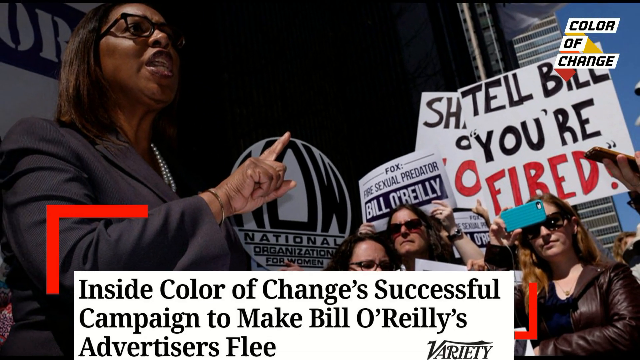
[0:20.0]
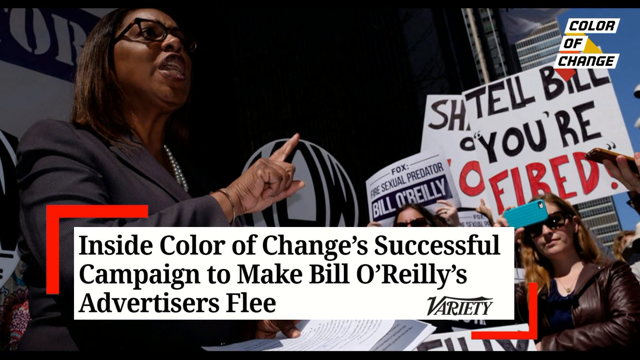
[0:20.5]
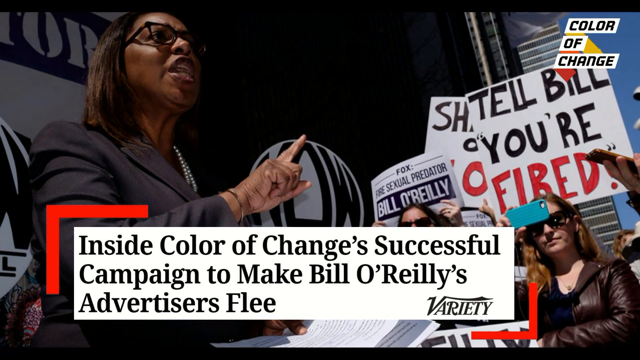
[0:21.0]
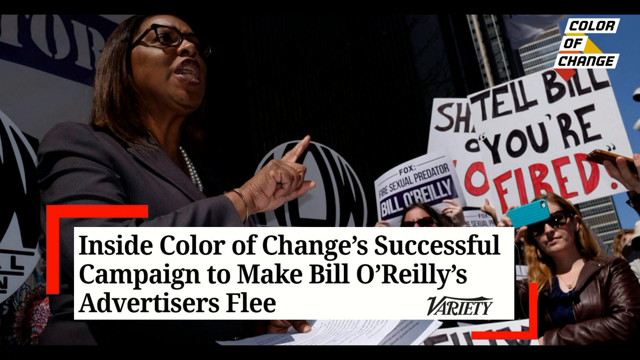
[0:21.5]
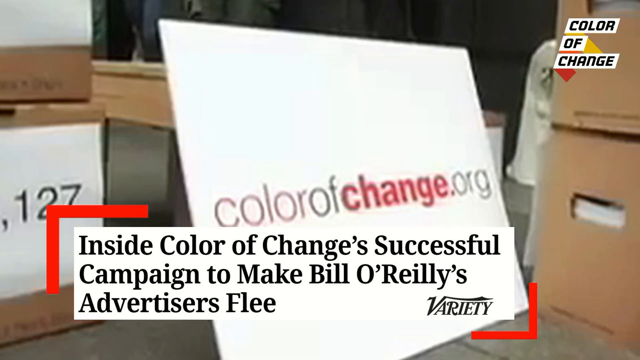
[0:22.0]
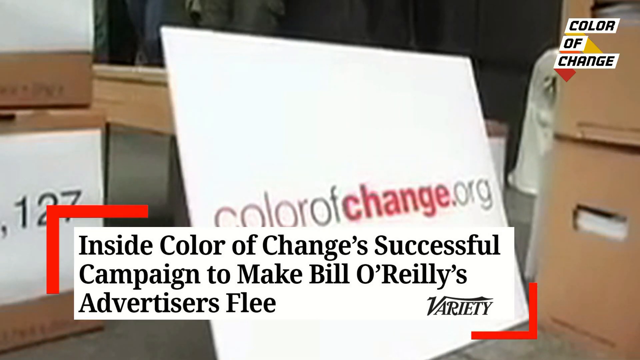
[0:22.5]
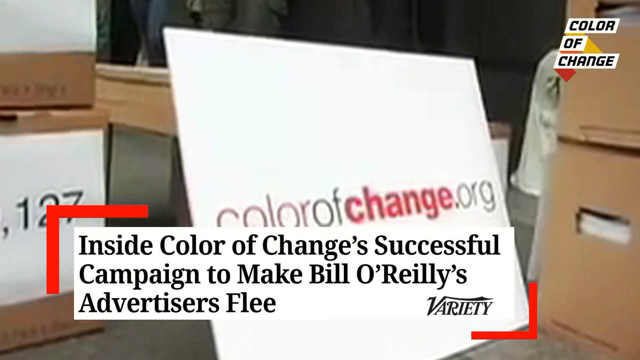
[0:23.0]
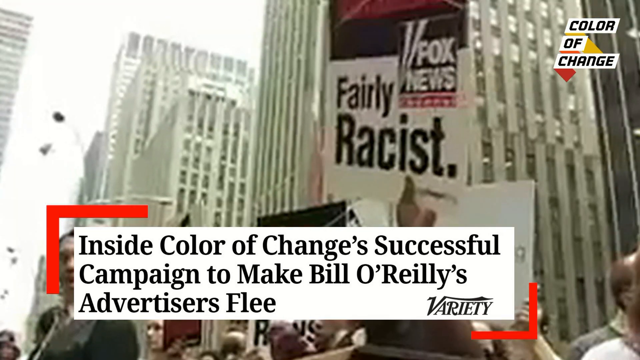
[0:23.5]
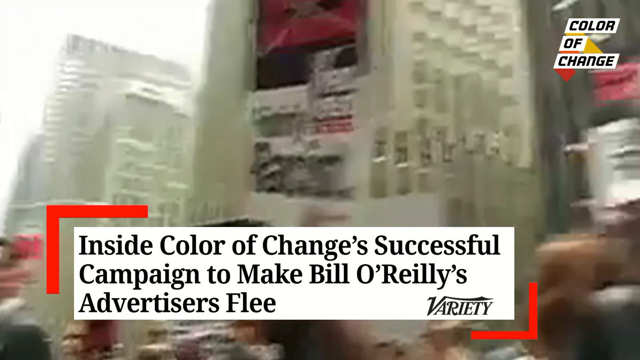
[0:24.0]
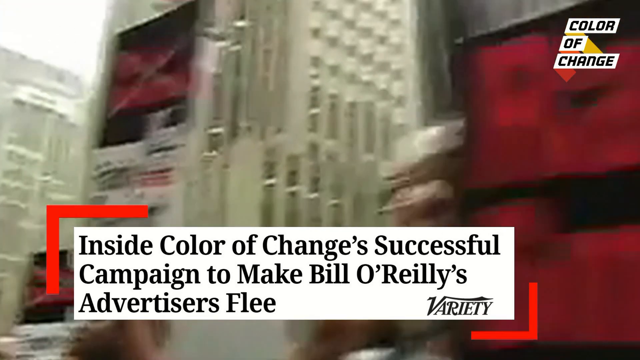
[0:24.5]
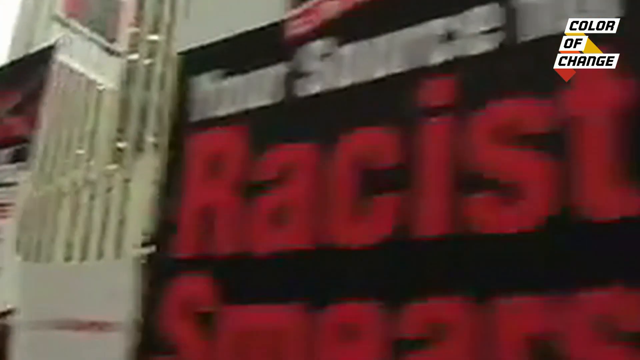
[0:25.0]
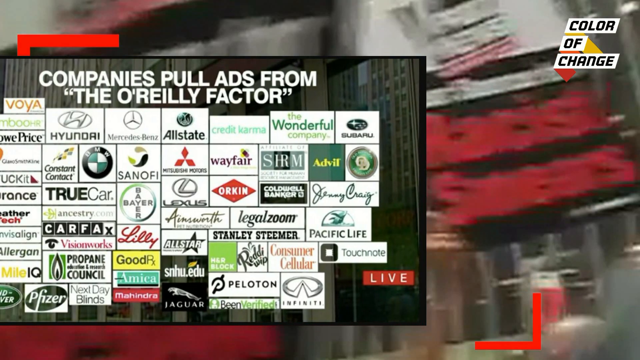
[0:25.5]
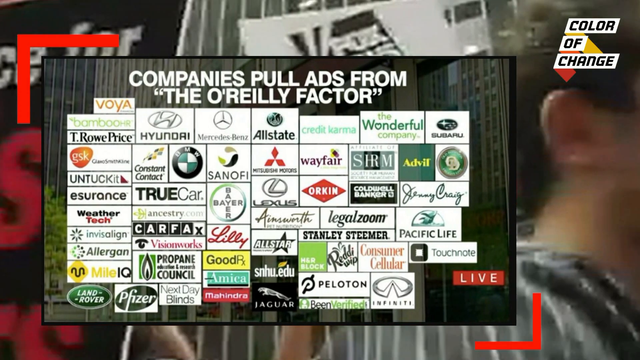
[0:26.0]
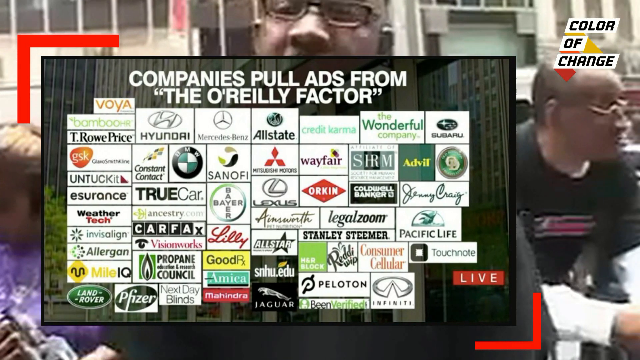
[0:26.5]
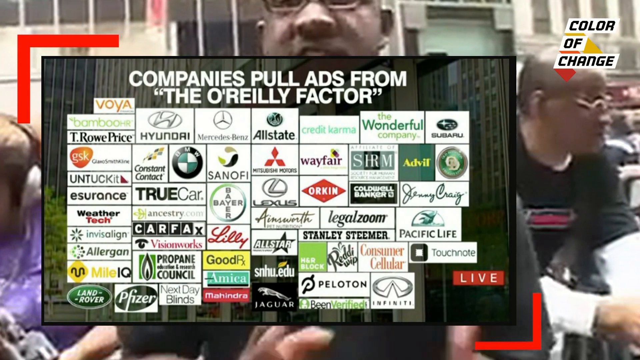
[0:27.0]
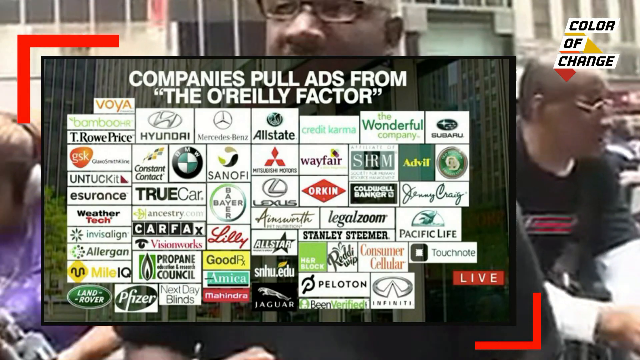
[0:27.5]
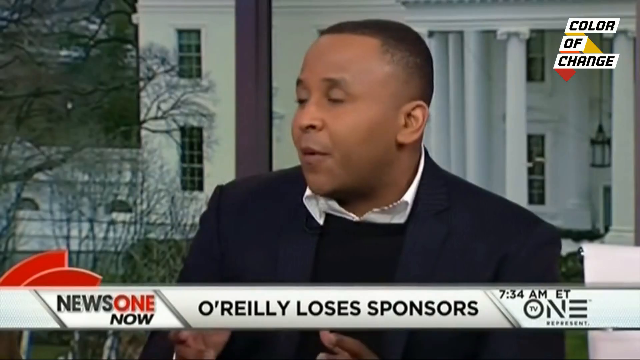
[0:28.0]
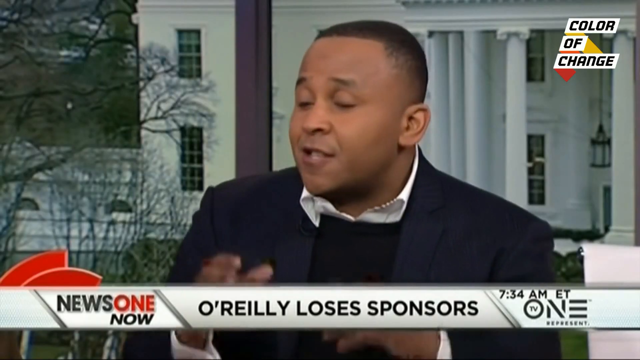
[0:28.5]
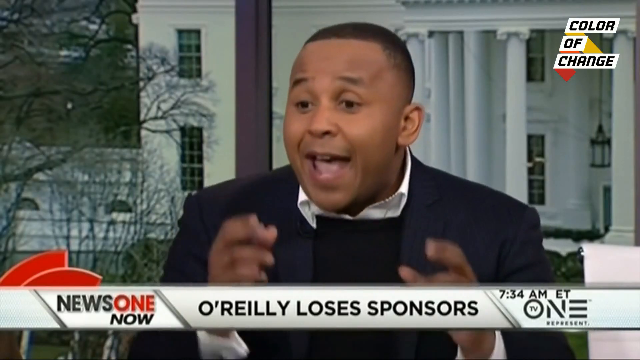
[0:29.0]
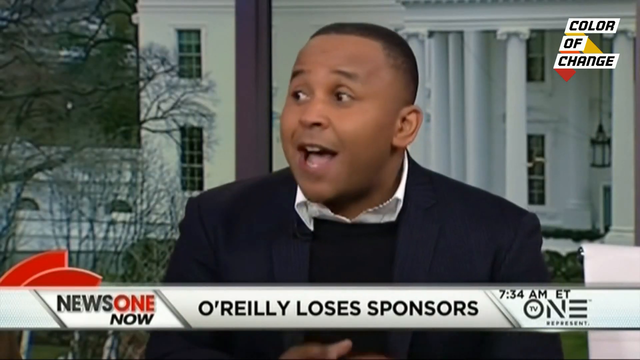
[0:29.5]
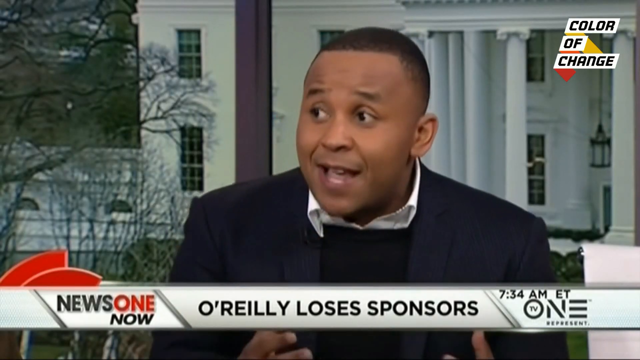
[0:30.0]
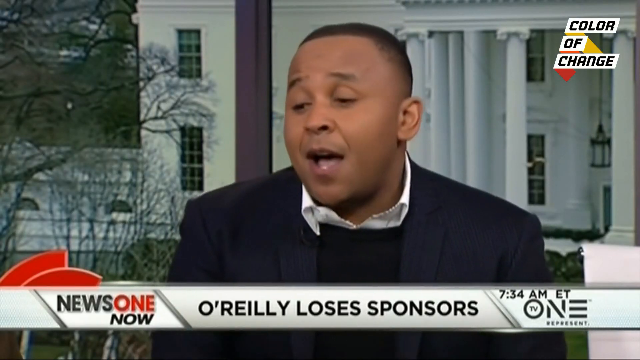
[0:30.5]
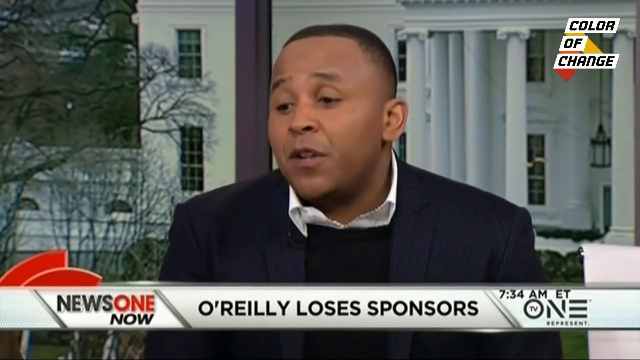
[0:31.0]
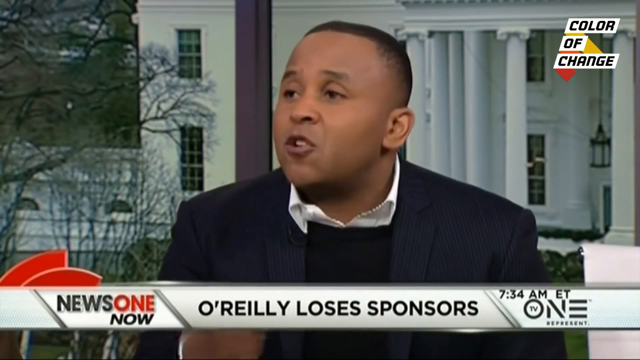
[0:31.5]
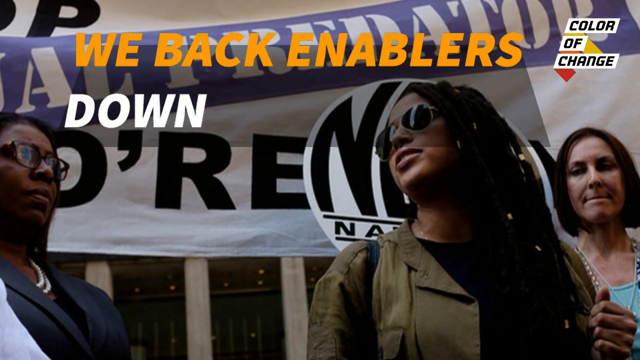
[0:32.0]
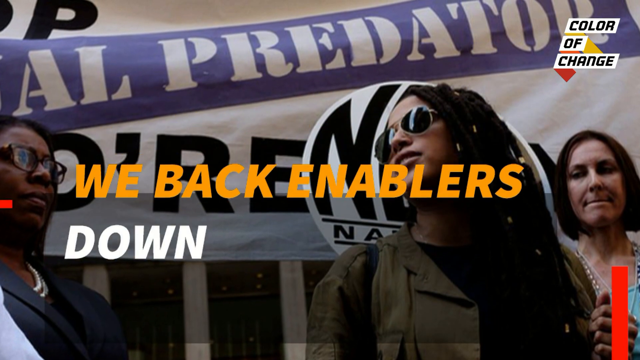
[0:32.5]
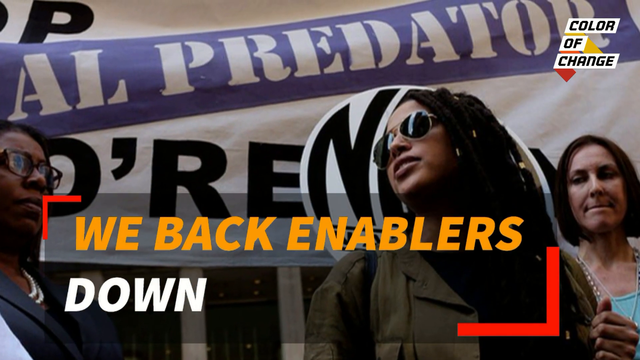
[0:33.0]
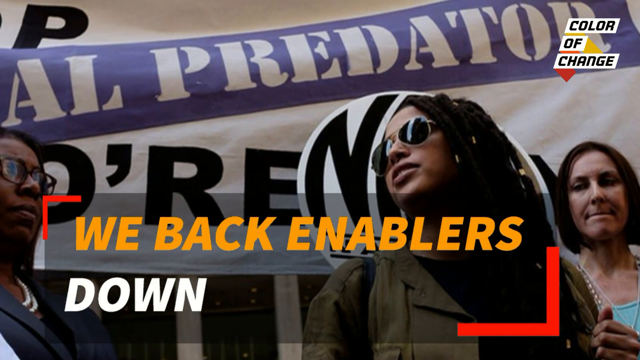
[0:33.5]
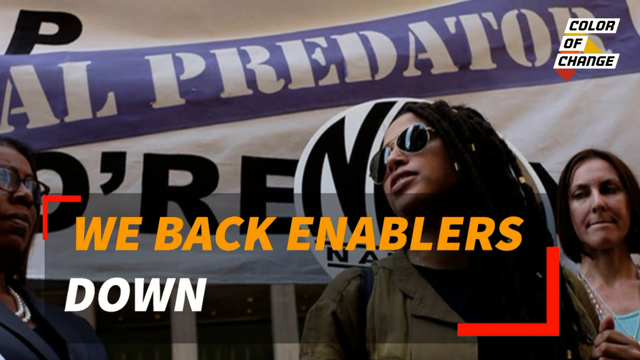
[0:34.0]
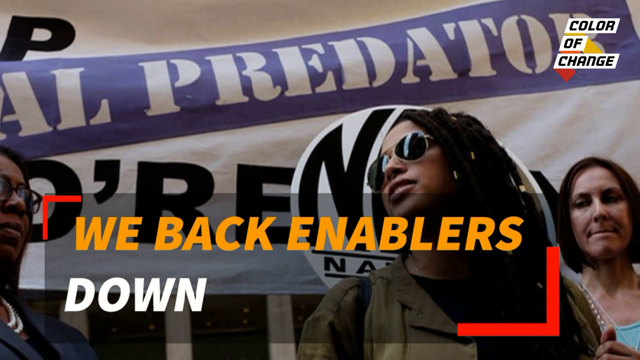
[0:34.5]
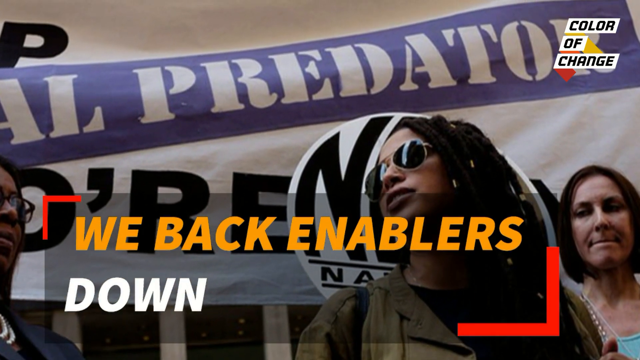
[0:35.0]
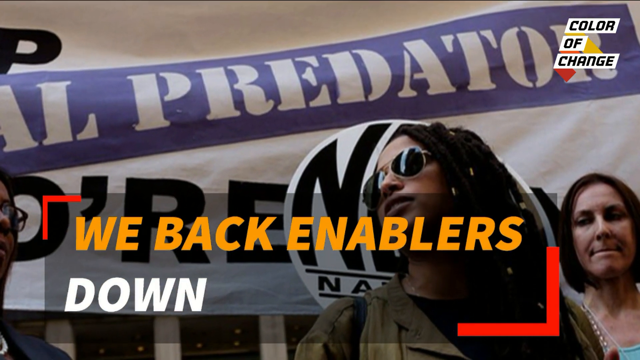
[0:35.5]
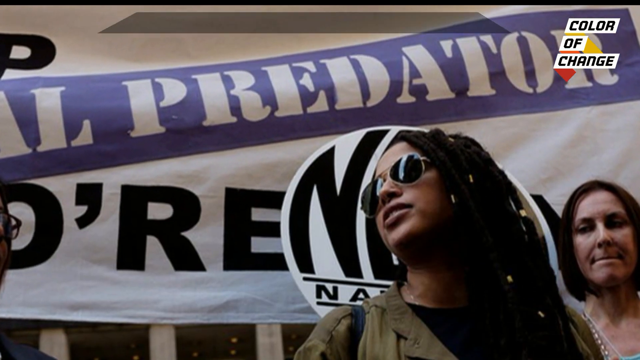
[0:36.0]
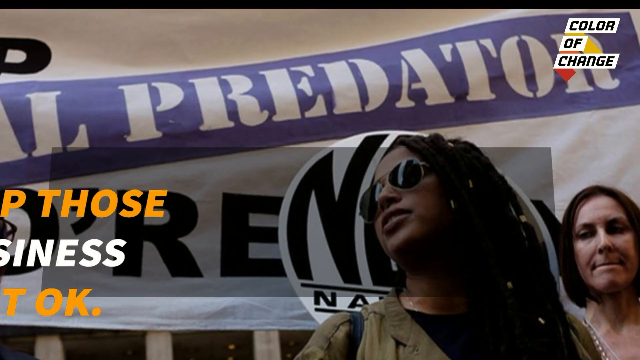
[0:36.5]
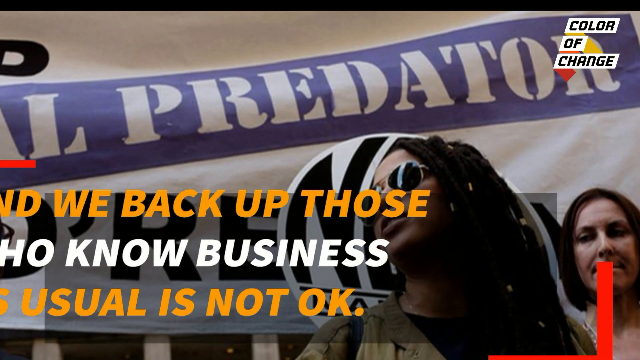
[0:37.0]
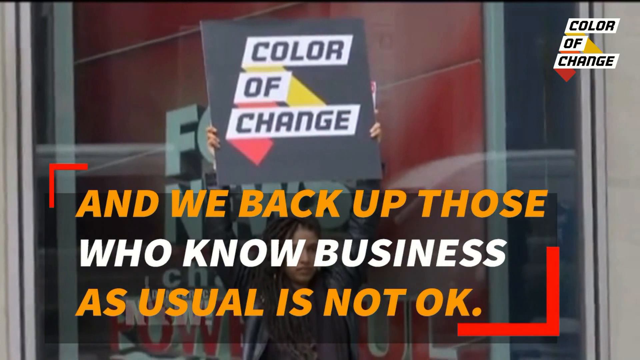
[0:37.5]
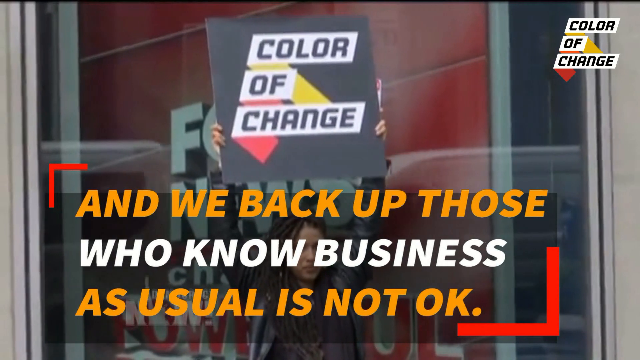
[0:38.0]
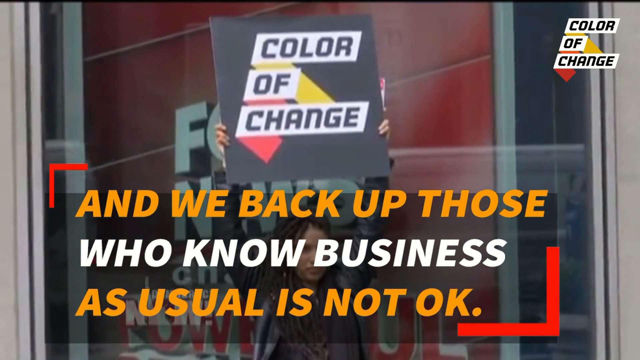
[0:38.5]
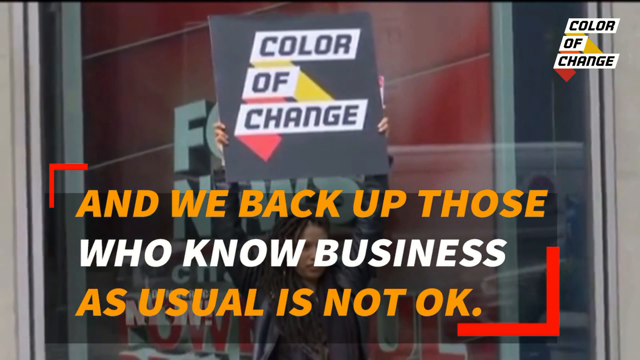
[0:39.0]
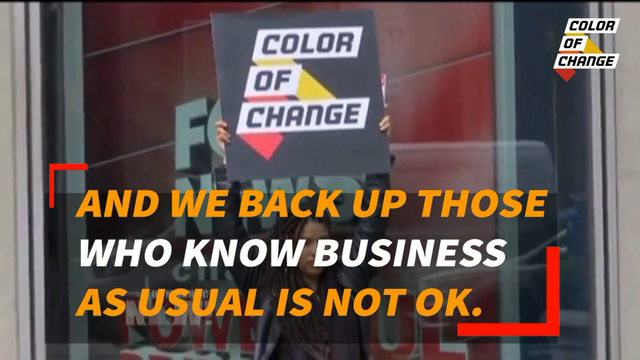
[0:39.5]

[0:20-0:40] A Variety headline reads "Inside Colour of Change's Successful Campaign to Make Bill O'Reilly's Advertisers Flee." Colour of Change banners are up, and the companies that pulled their ads are listed: Hyundai, Mercedes-Benz, BMW, Lilly, Wayfair, Peloton, Infinity, Pfizer, Land Rover and Jaguar. A News One Now show discusses the campaign. The video then says "we back enablers down. And we back up those who know business as usual is not okay." Colour of Change protesters stand outside the business premises of one of the sponsors of the O'Reilly Factor.